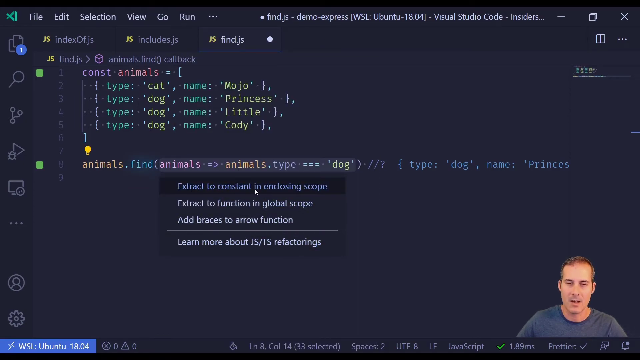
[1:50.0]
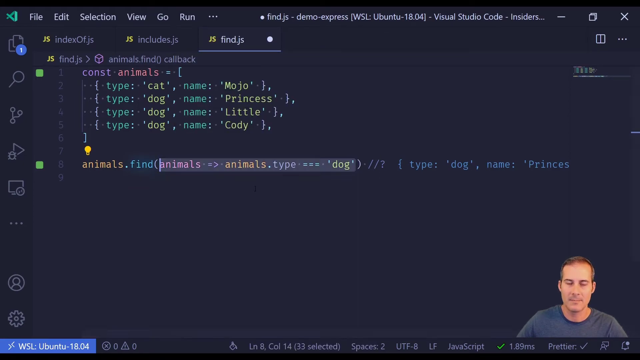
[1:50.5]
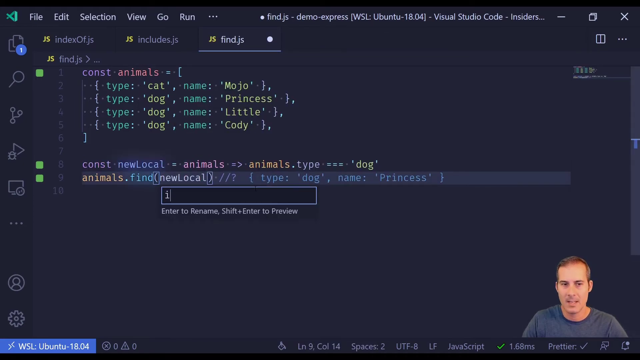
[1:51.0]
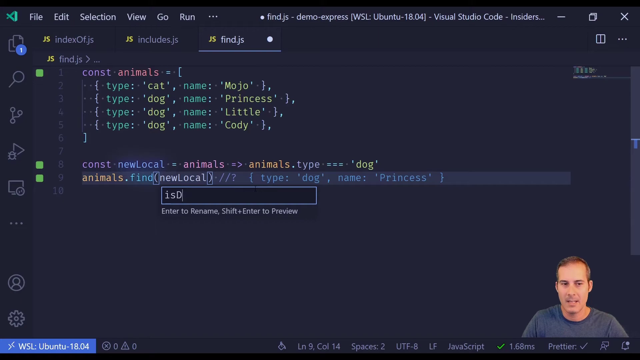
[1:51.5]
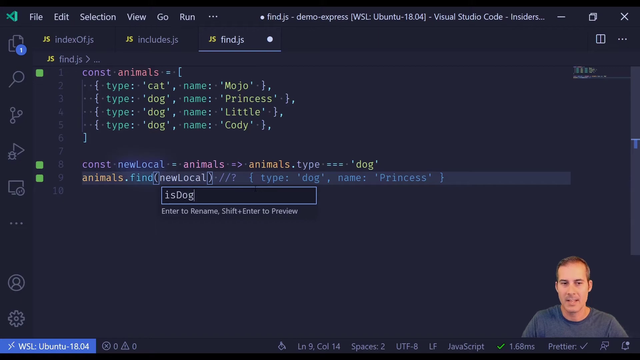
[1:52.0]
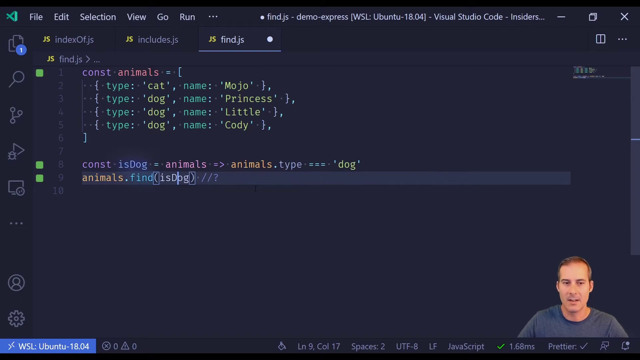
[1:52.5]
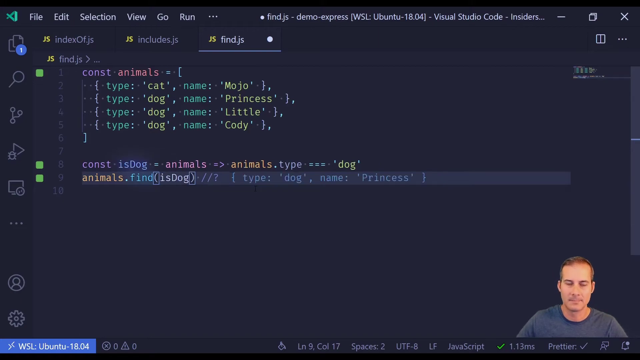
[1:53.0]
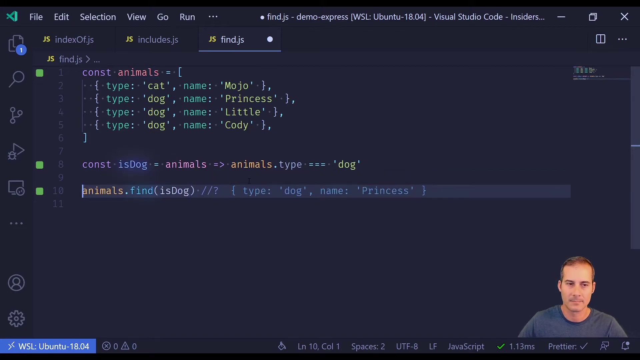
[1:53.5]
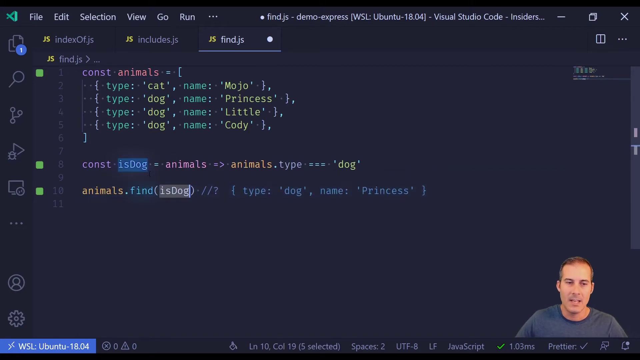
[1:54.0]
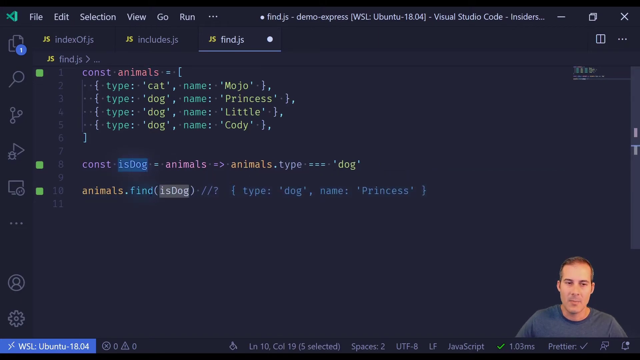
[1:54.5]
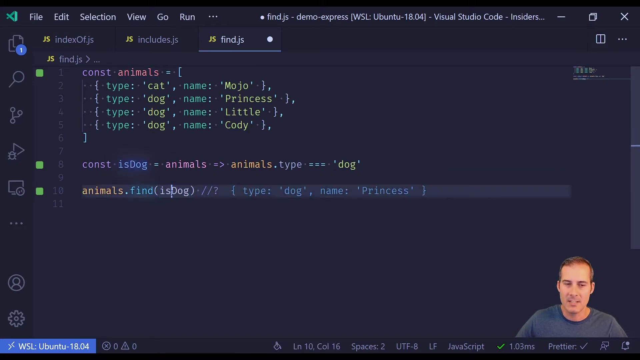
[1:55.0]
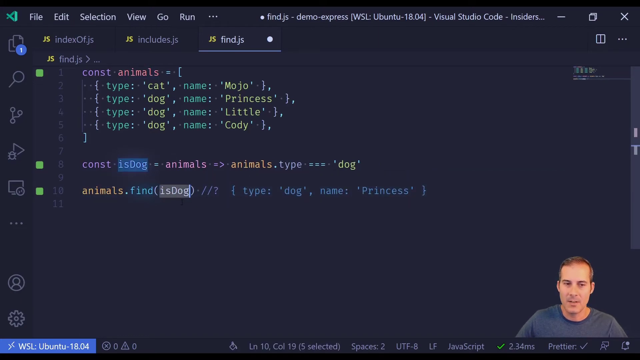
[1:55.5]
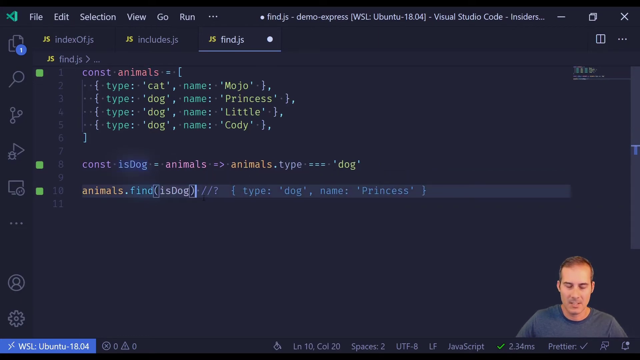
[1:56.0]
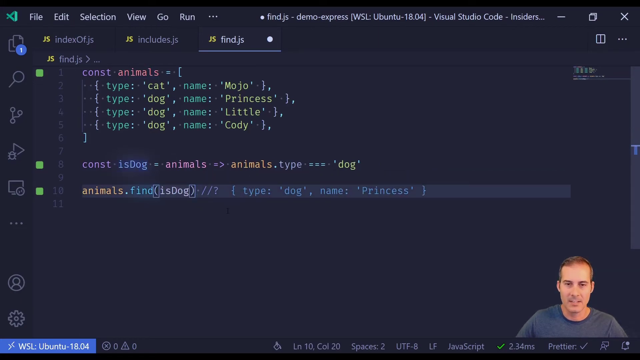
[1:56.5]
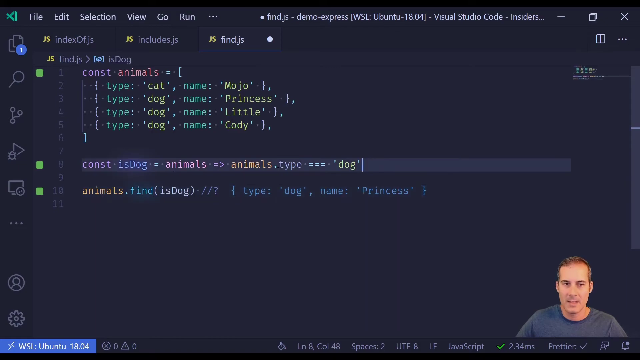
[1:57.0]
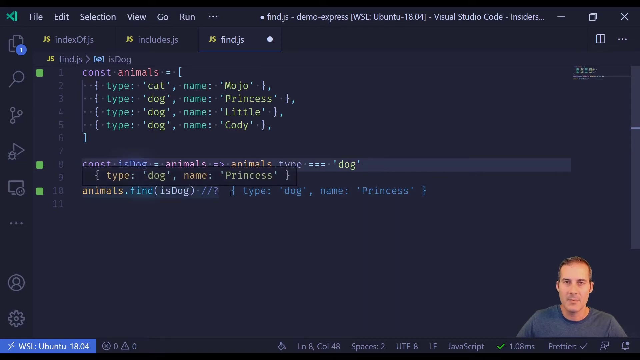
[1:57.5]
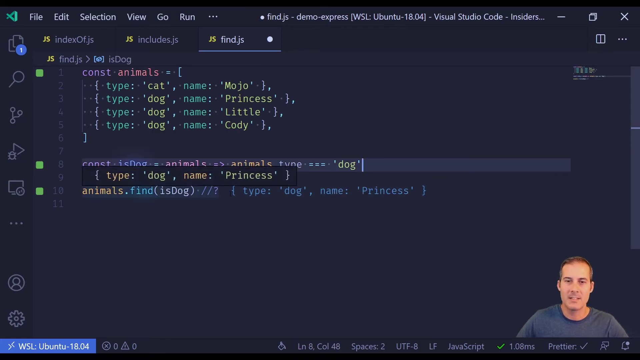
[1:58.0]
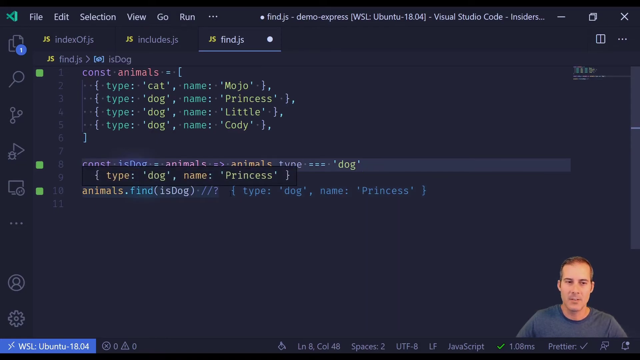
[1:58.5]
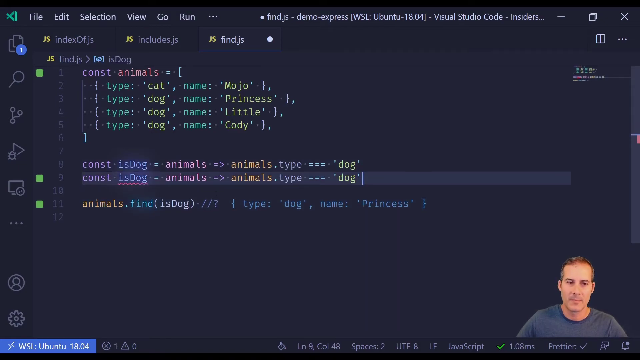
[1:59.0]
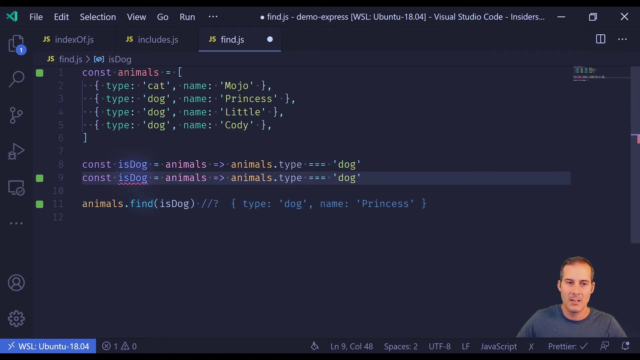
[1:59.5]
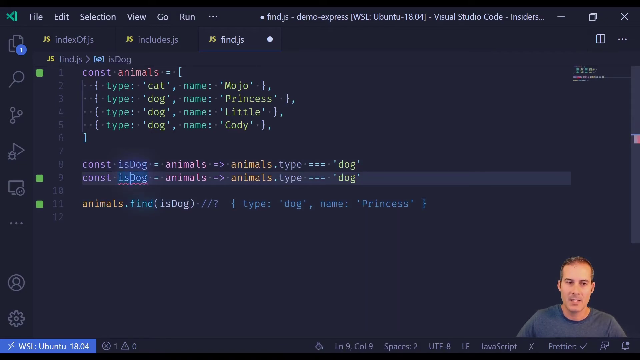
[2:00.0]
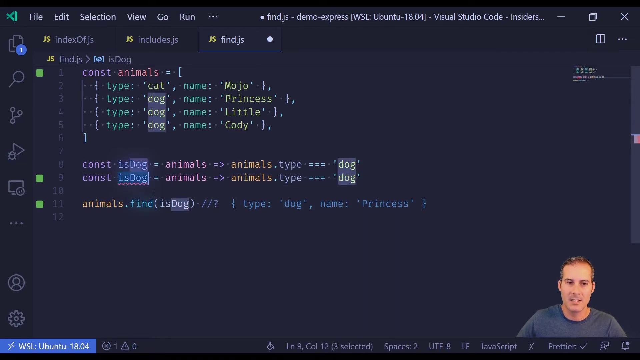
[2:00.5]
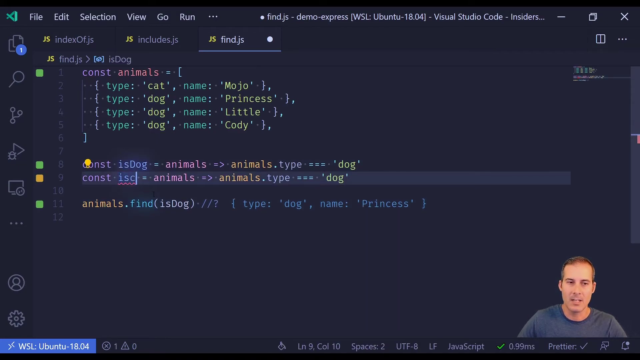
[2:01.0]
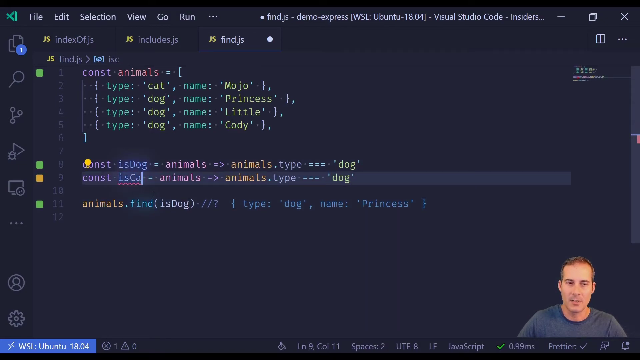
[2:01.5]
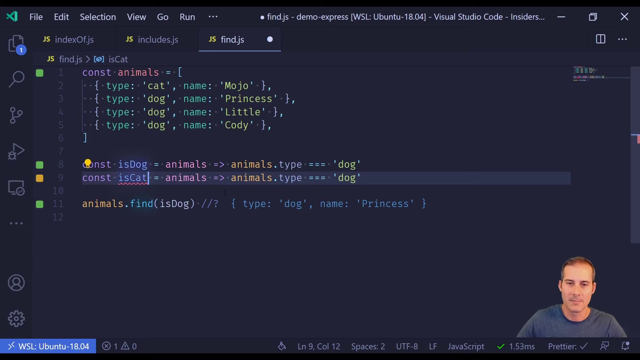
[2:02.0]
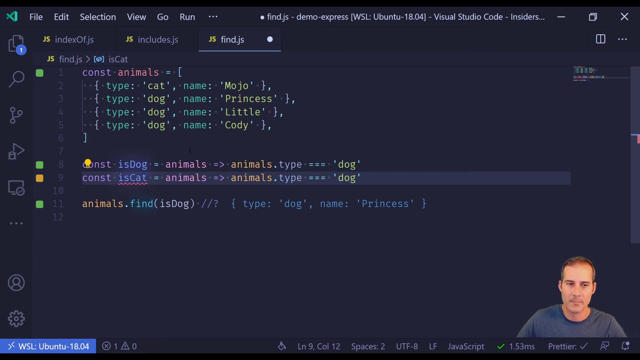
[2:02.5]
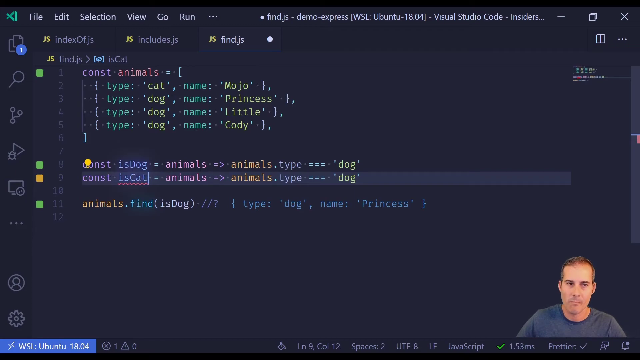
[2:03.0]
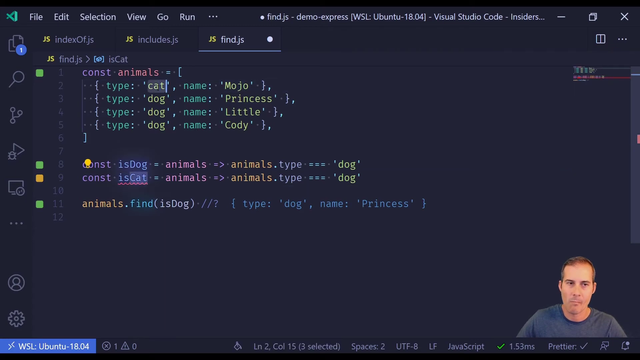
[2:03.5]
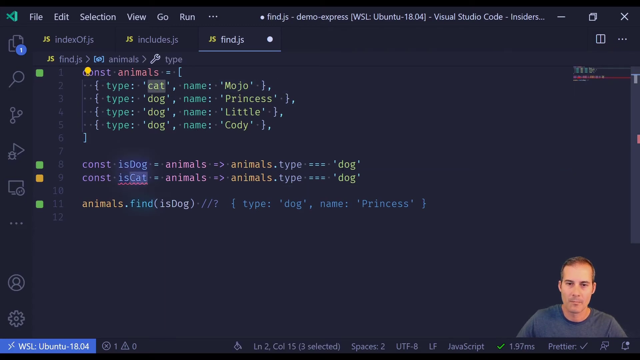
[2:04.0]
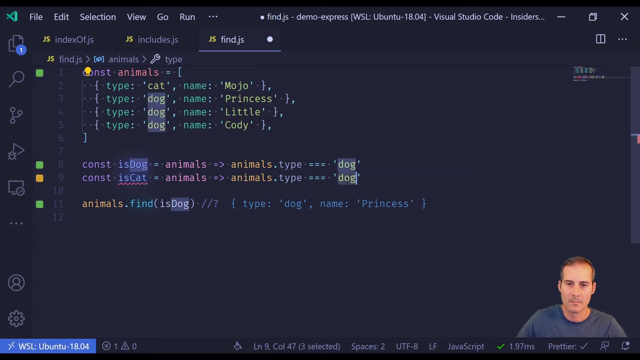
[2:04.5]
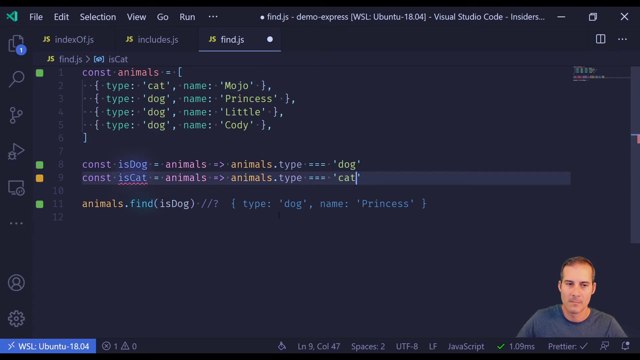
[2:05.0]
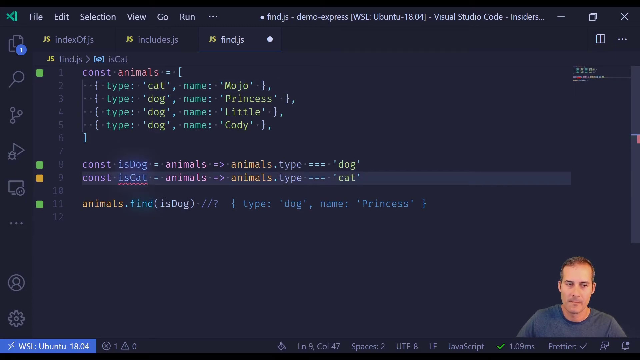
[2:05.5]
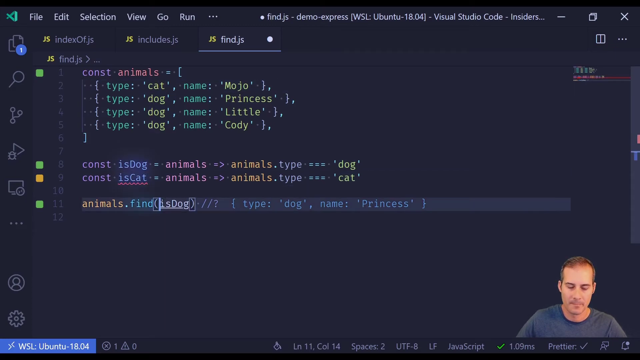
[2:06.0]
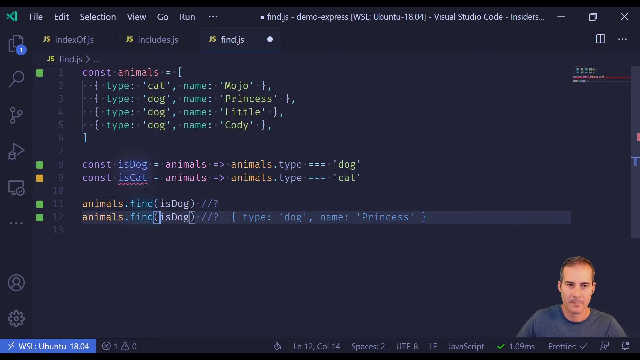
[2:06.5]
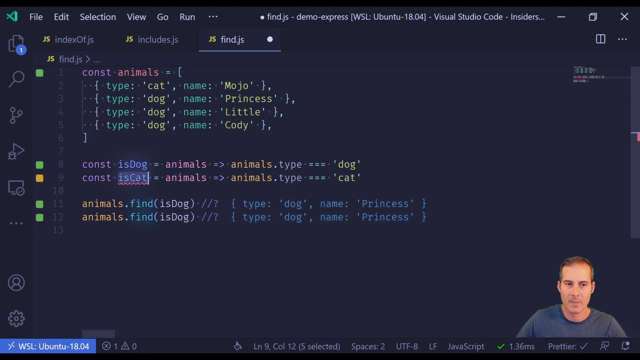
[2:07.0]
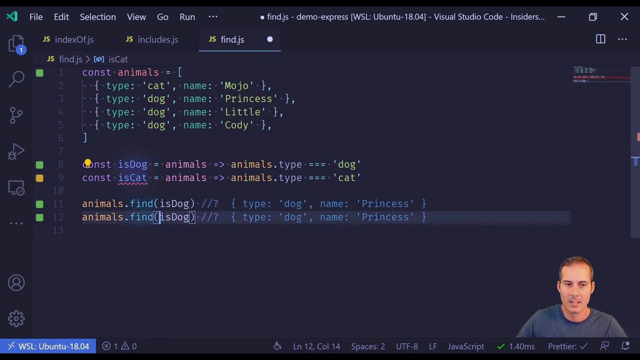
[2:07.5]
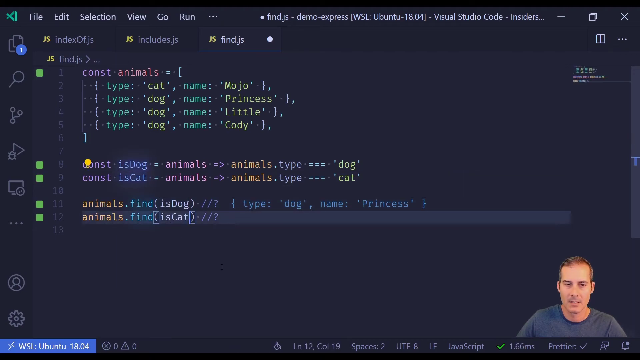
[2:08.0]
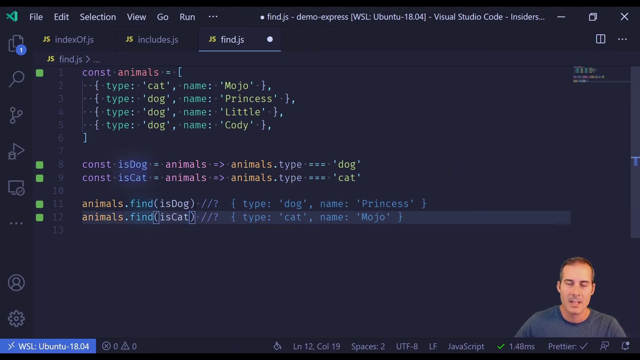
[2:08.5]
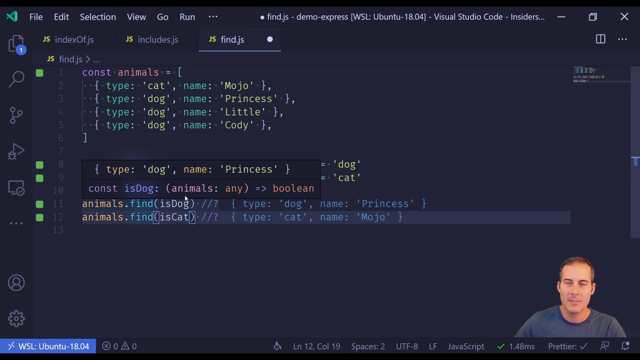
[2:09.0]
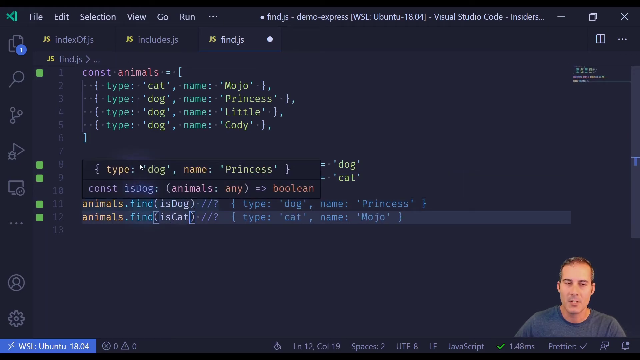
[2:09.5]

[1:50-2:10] A drop-down menu reads "extract to constant and enclosing scope" and is open under the line with "animals", "find animals", "animals type" and "dog". Then "find new local" appears along with "enter to rename shift + enter to preview", and "is dog" is typed in. The name is then changed from "is dog" to "is cat". Joel is down in the bottom left corner.